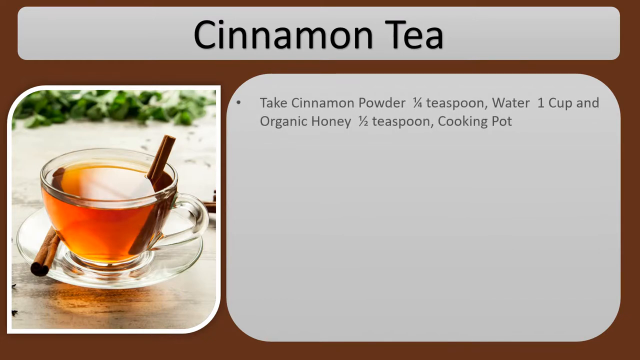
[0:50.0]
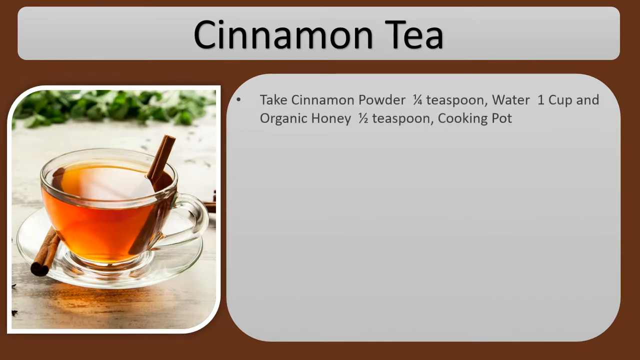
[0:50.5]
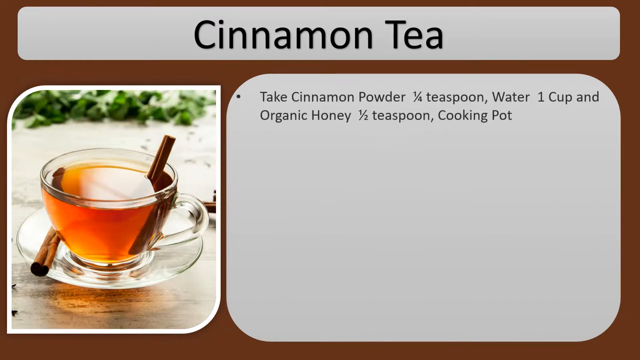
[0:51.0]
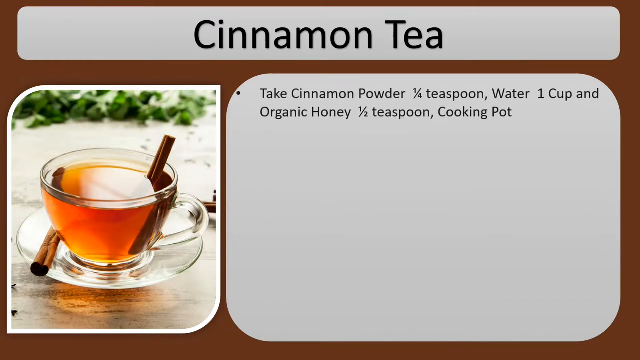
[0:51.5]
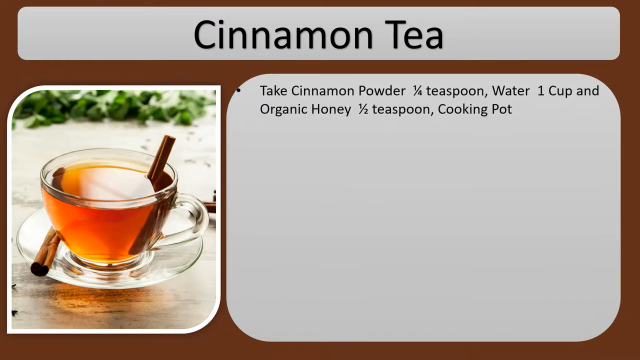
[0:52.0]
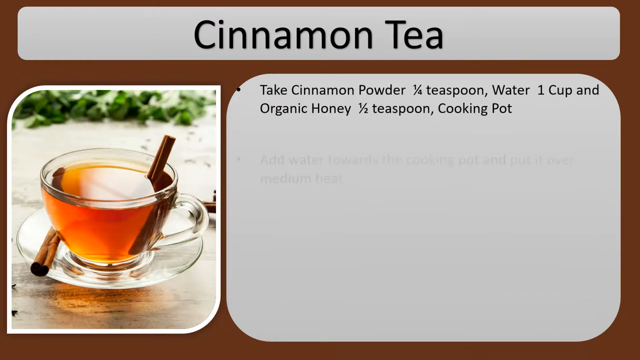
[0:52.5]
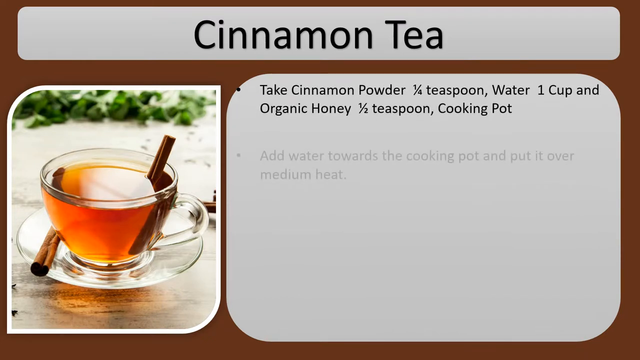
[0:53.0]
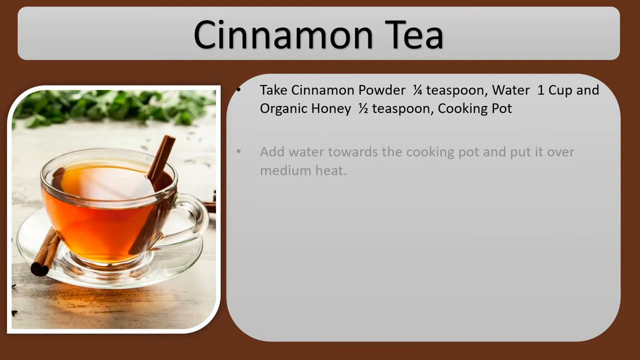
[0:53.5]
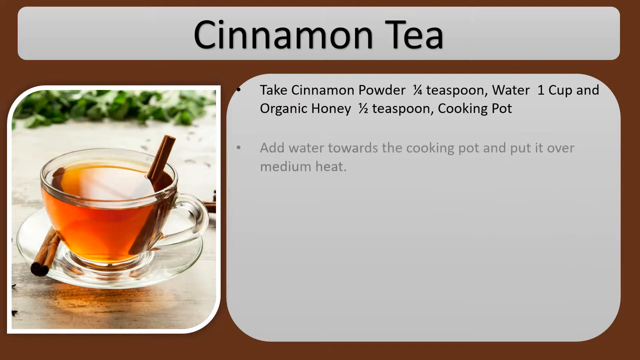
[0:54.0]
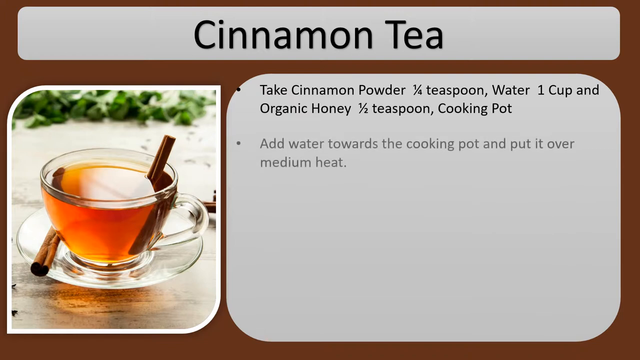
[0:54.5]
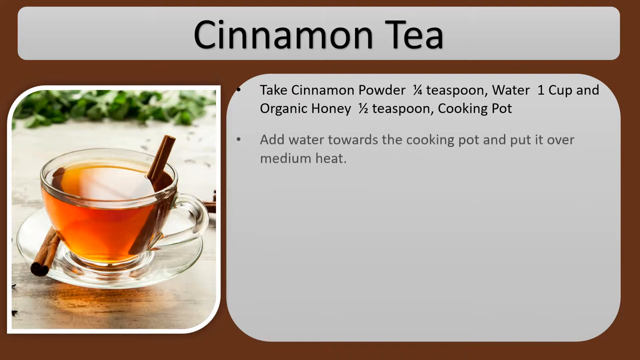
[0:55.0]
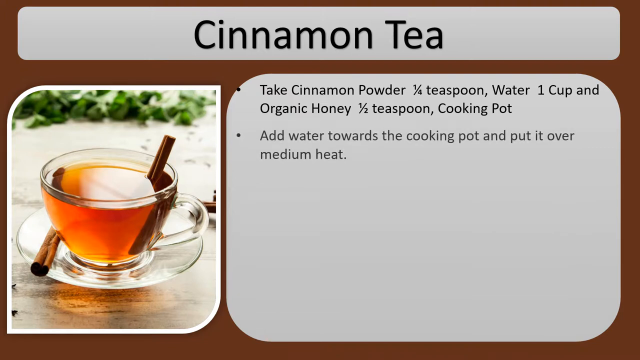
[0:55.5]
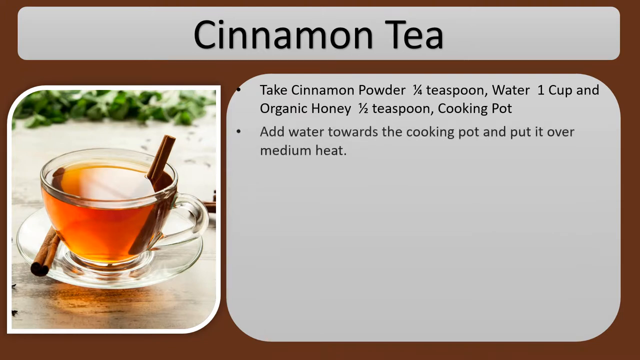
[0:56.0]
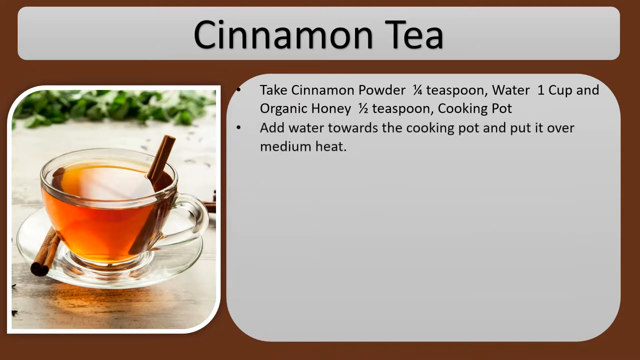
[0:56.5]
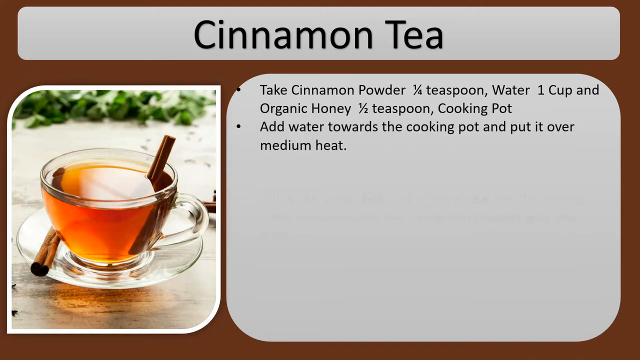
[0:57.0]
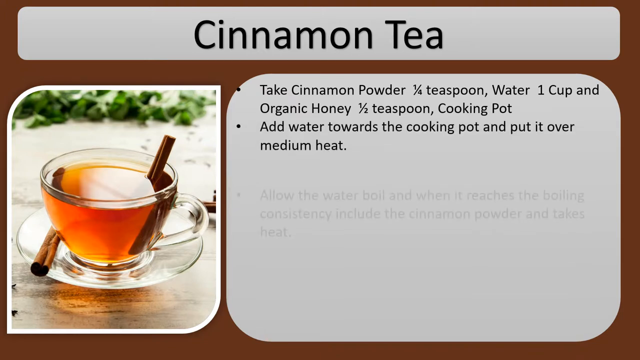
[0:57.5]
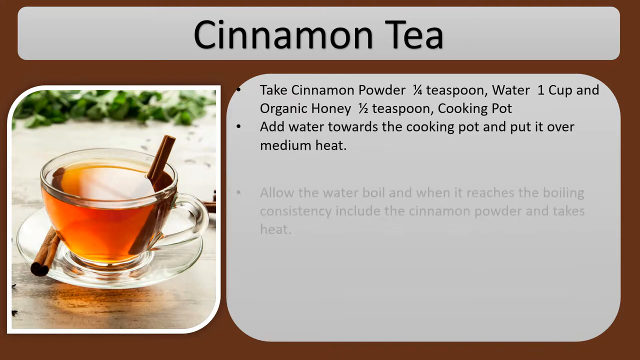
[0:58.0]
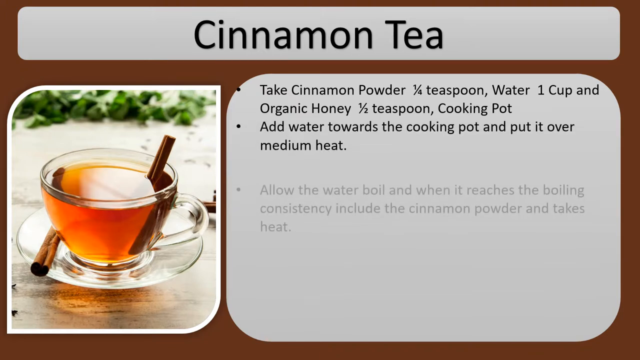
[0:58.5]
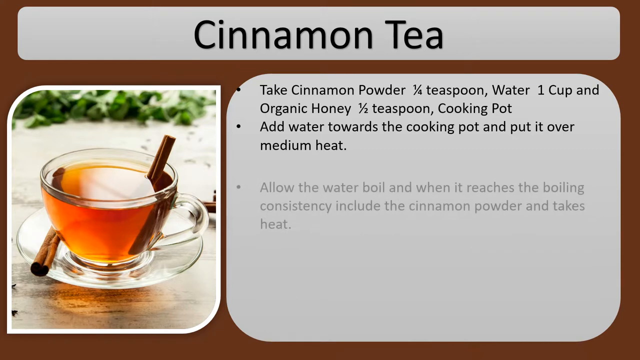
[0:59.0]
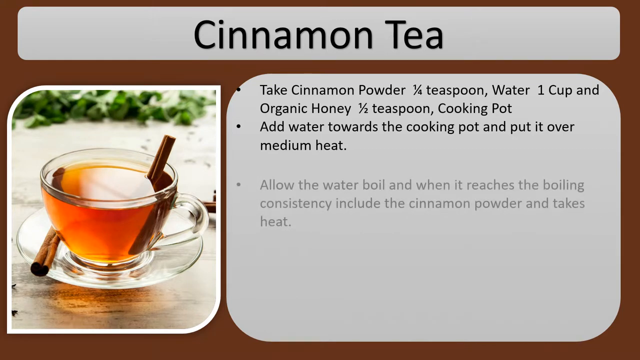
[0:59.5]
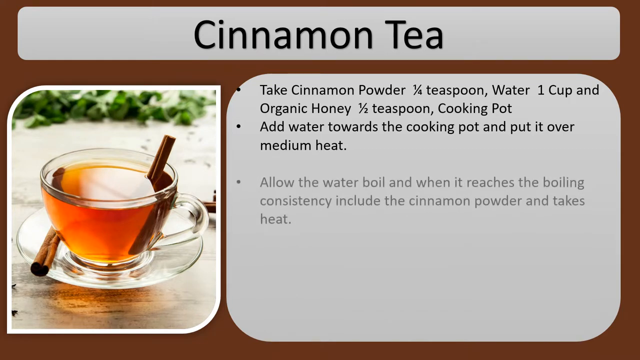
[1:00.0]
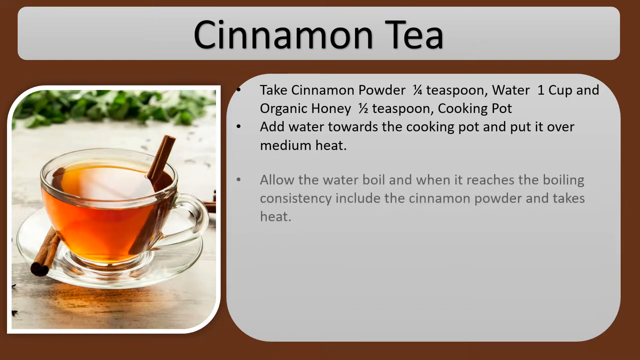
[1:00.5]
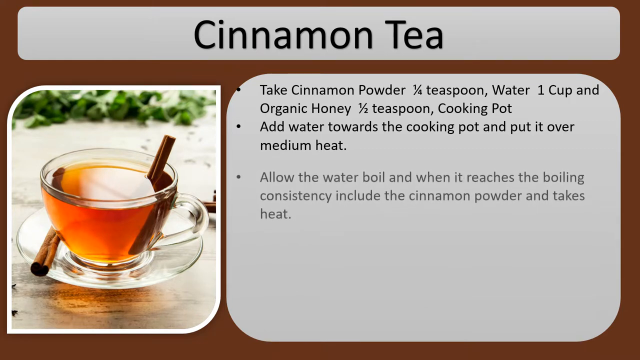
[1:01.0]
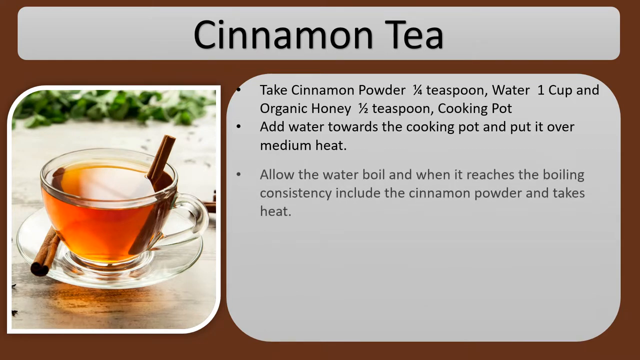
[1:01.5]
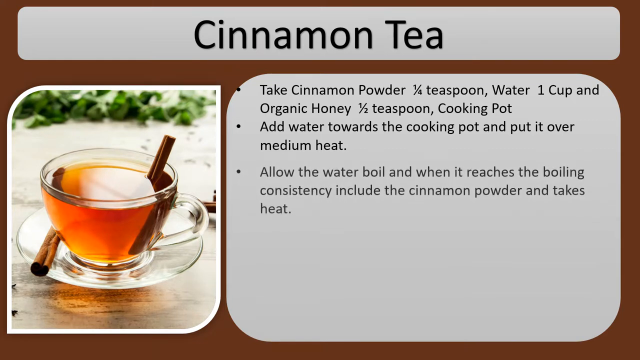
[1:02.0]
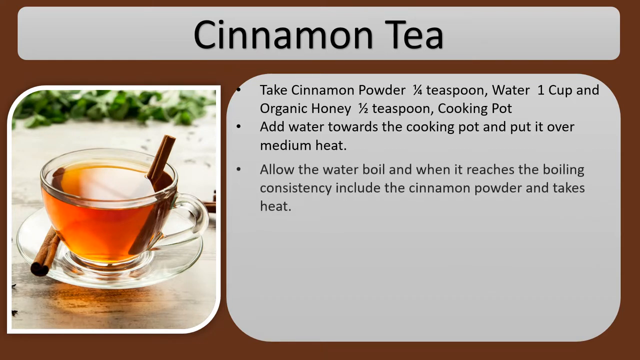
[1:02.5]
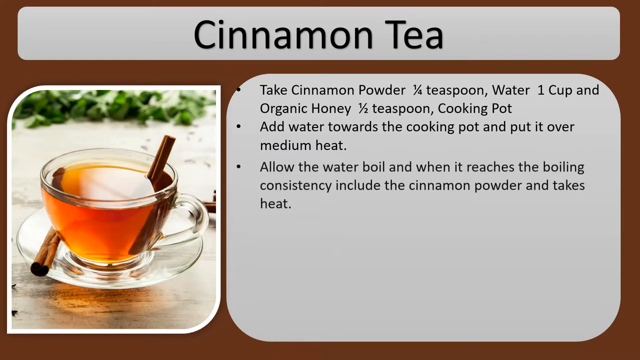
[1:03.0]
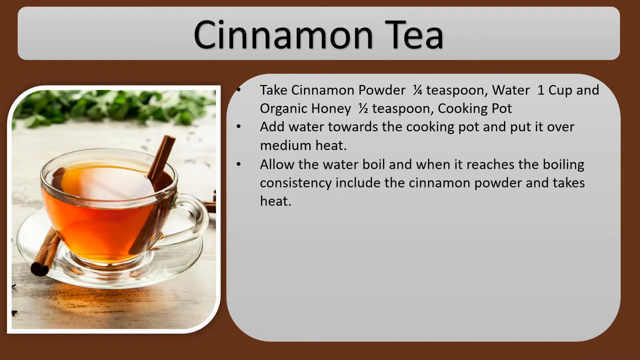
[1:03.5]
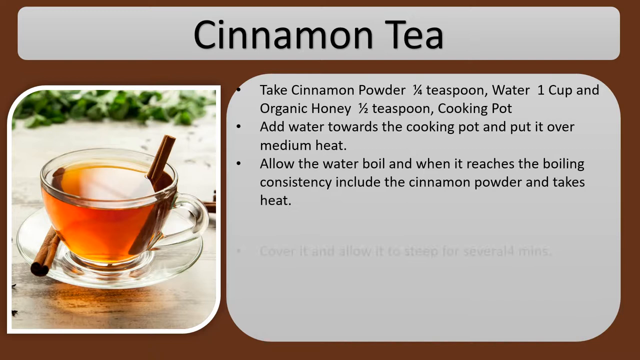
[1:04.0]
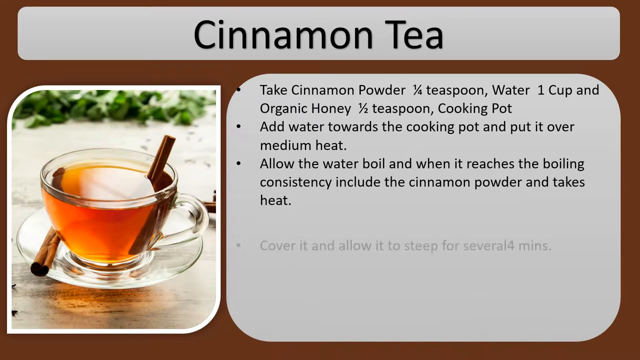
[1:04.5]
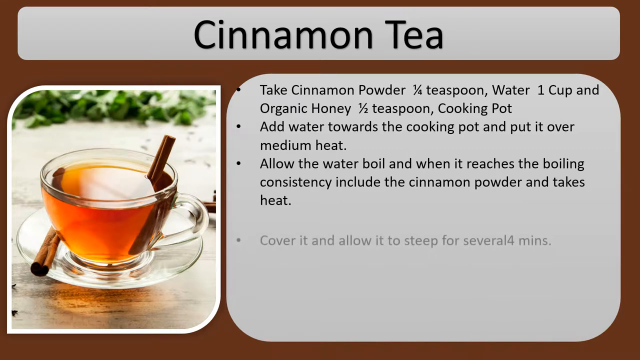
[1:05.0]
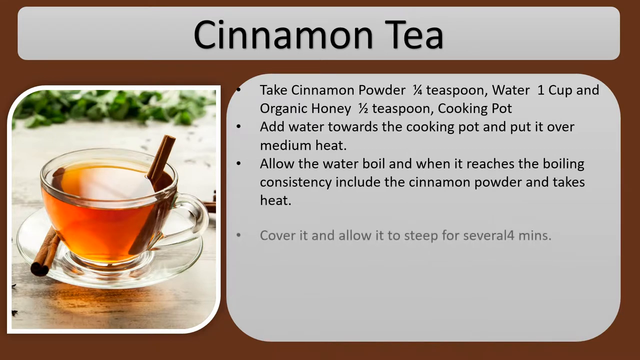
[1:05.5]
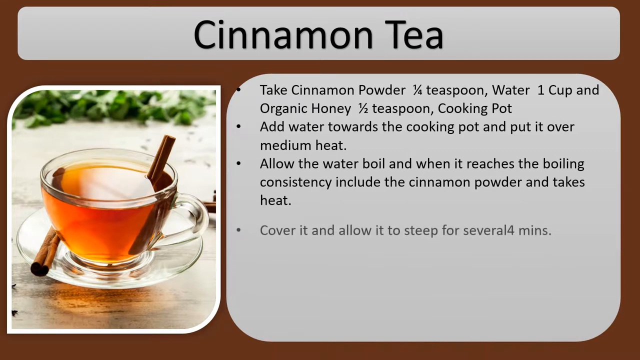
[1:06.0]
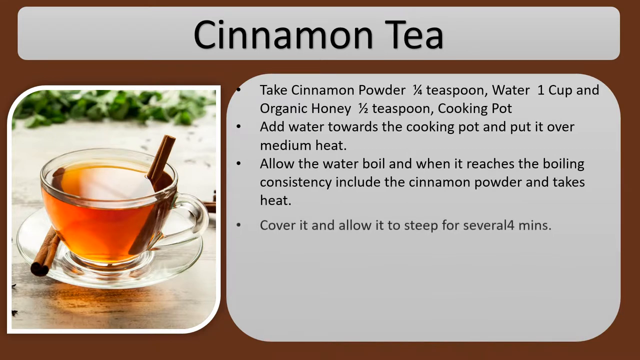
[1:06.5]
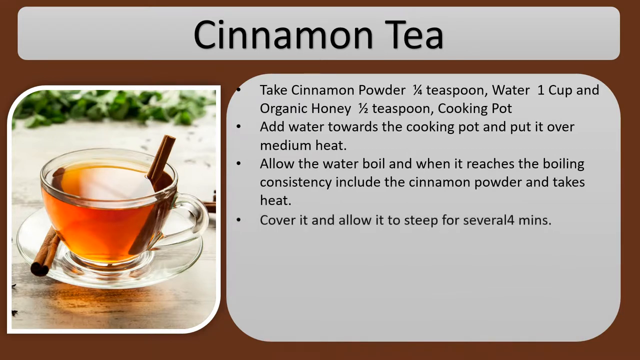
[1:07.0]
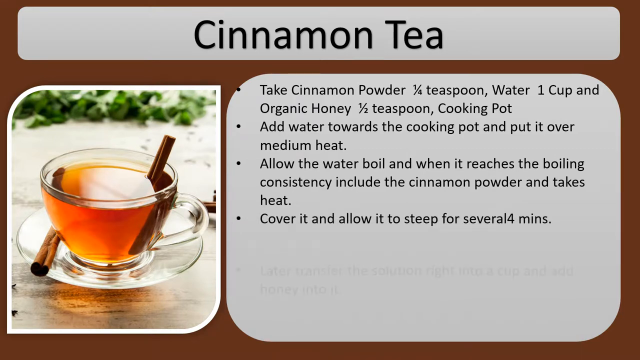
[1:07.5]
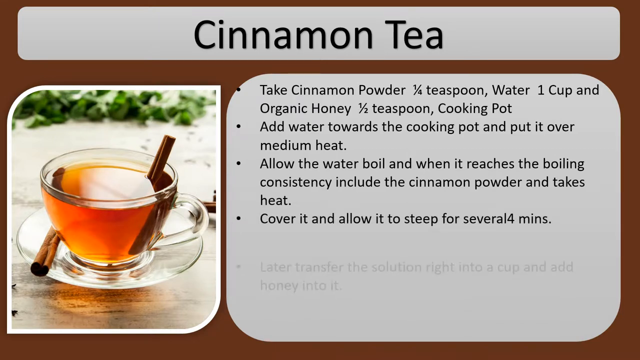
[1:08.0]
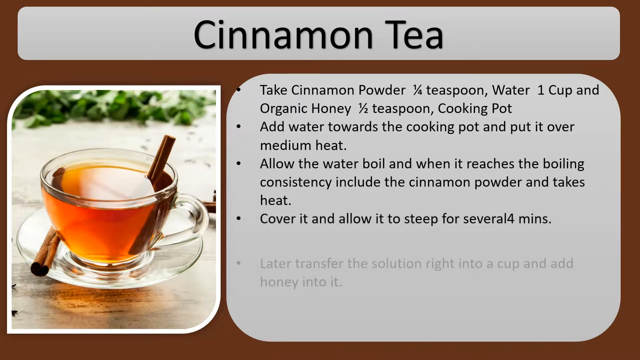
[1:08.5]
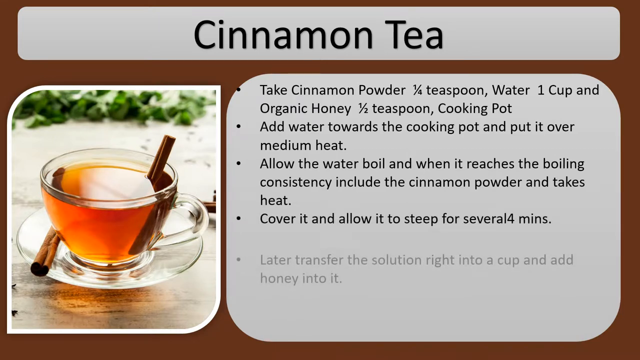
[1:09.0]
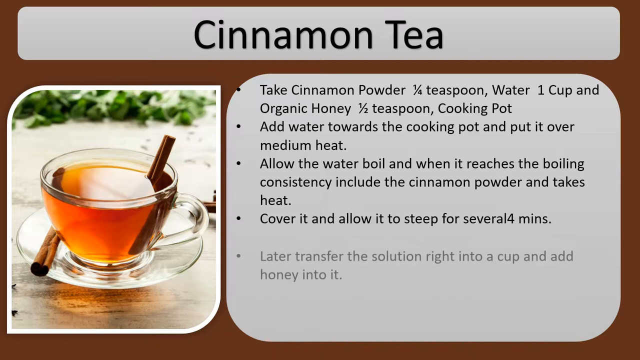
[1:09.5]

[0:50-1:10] Bullet points with information about cinnamon tea come up on the screen. The first reads "take a cinnamon powder, 1 1⁄4 teaspoon, water, one cup, and organic honey, 1⁄2 teaspoon, cooking pot," listing ingredients and tools. The next says "add water towards the cooking pot and put it over medium heat." Another reads "allow the water boil. And when it reaches the boiling consistency, include the cinnamon powder and takes heat." The next says "cover it and allow it to steep for several four minutes," with no space between "several" and the number four. Then a bullet point reads "later transfer the solution right into a cup and add honey into it." The bullet points move up on the screen and fade into a darker colored font.